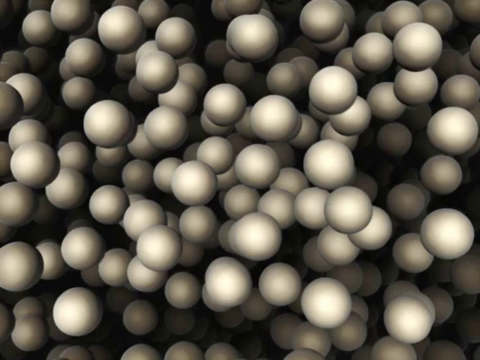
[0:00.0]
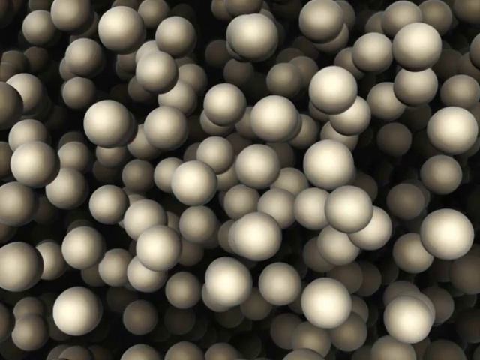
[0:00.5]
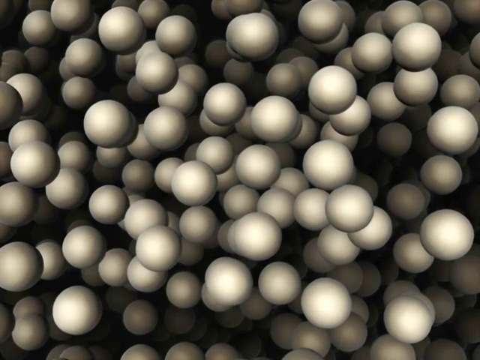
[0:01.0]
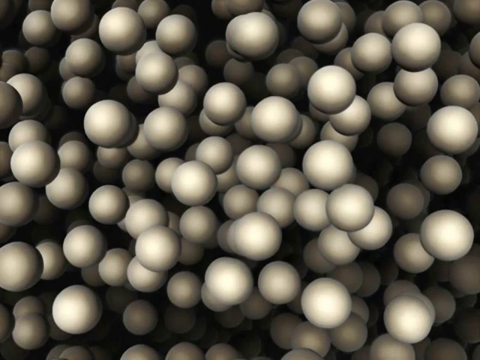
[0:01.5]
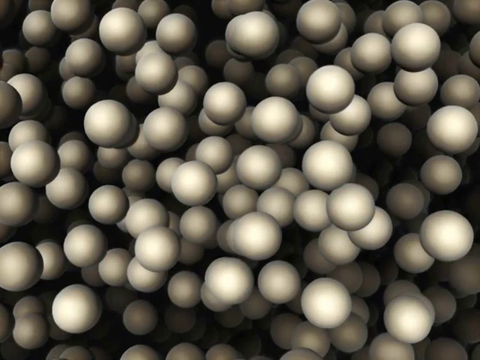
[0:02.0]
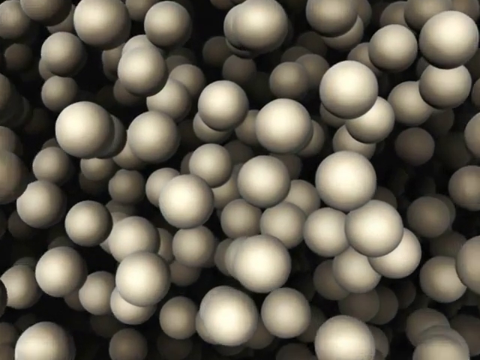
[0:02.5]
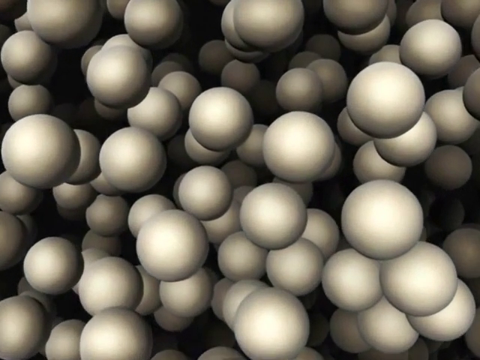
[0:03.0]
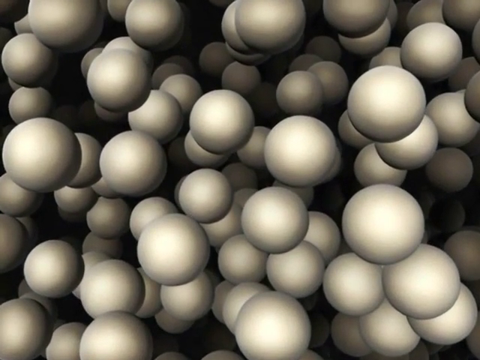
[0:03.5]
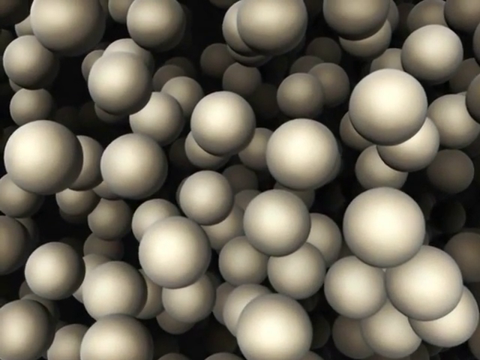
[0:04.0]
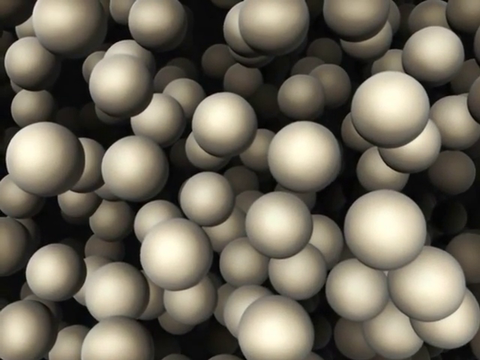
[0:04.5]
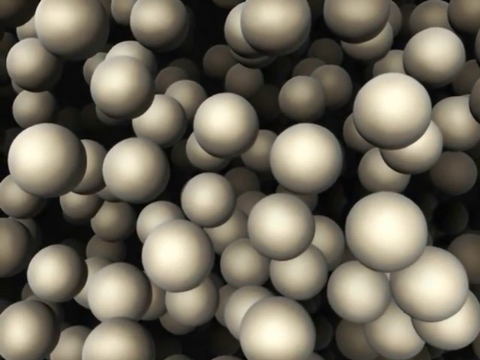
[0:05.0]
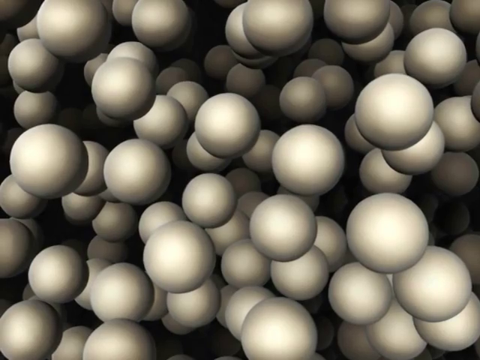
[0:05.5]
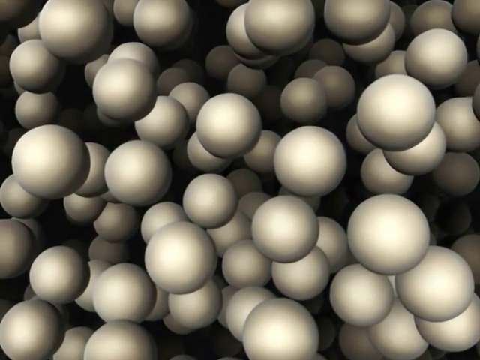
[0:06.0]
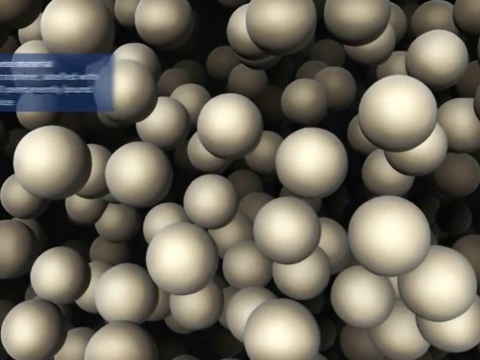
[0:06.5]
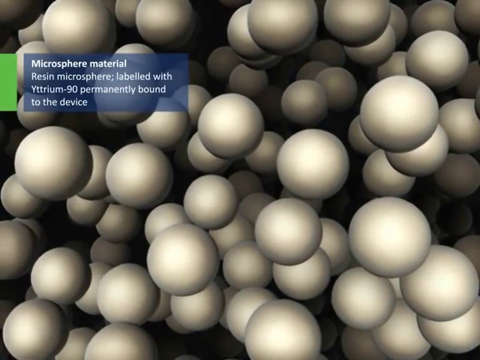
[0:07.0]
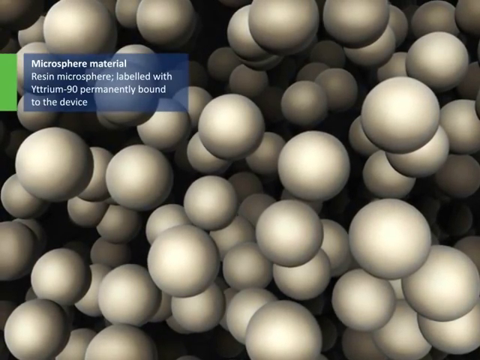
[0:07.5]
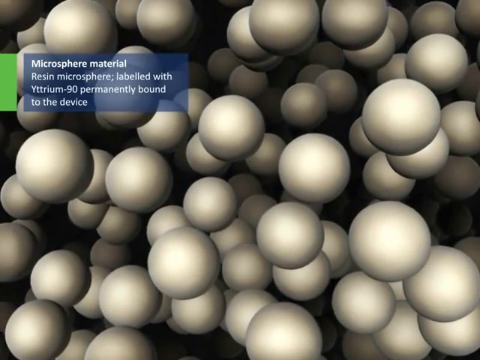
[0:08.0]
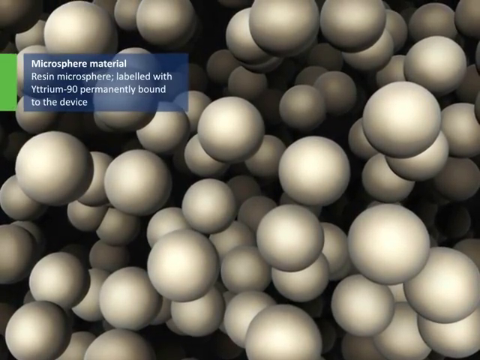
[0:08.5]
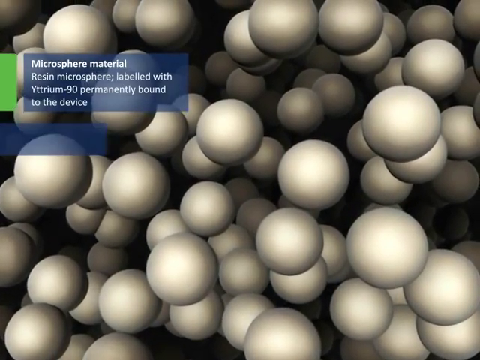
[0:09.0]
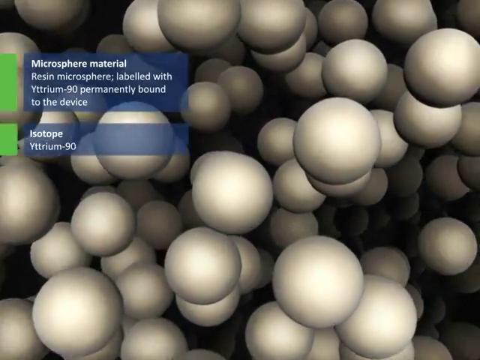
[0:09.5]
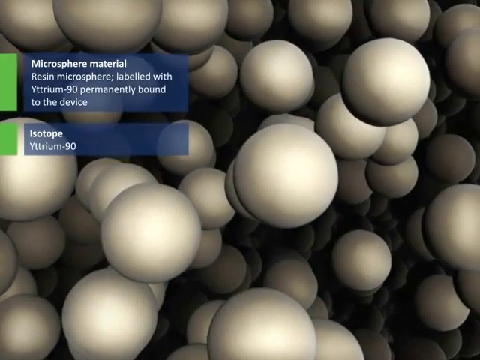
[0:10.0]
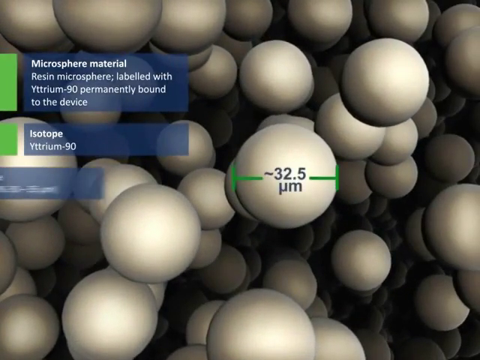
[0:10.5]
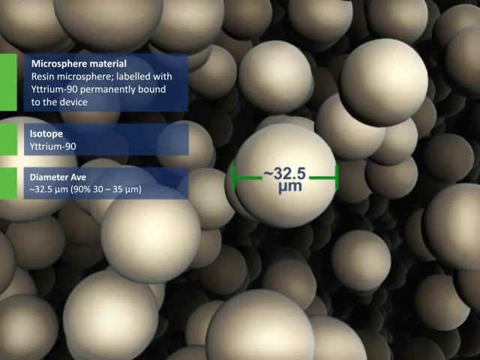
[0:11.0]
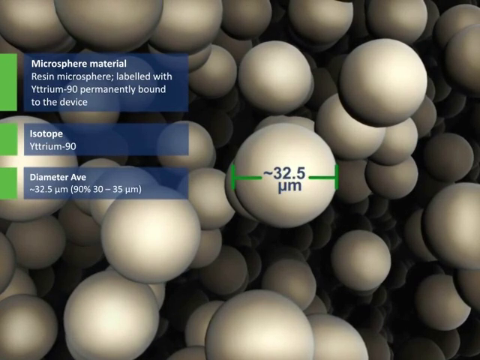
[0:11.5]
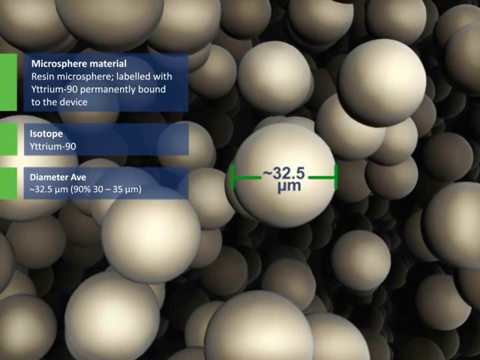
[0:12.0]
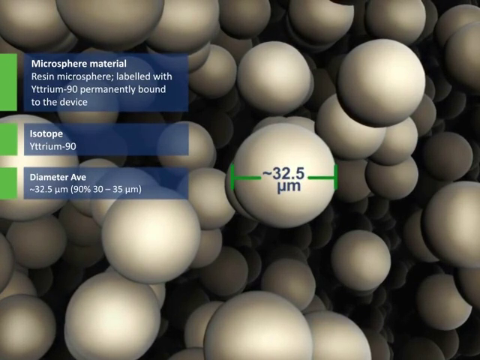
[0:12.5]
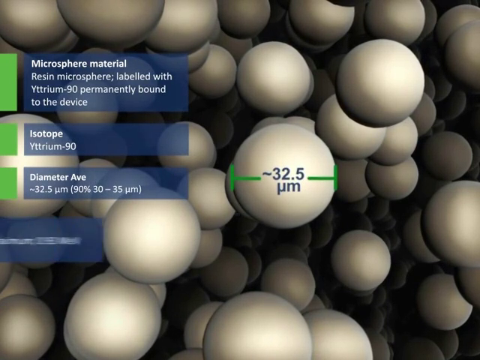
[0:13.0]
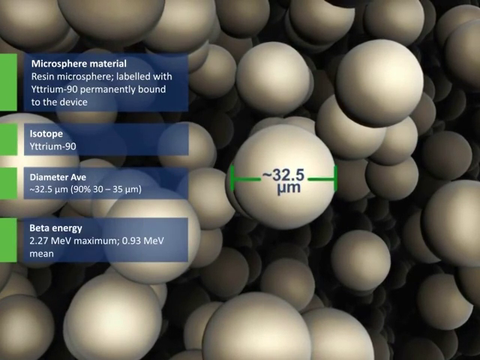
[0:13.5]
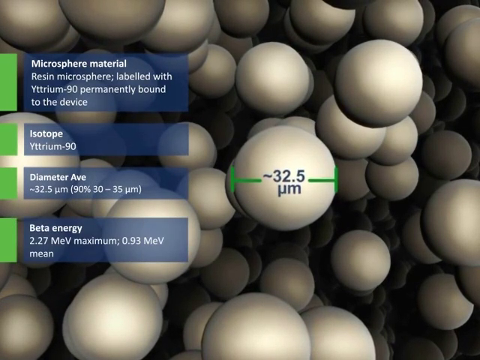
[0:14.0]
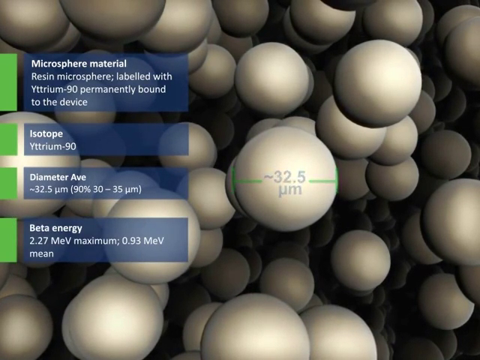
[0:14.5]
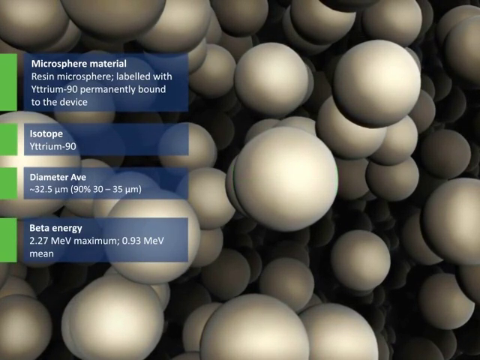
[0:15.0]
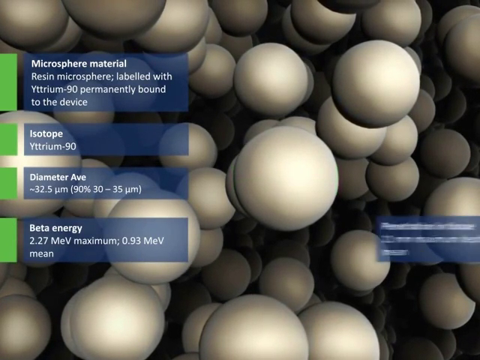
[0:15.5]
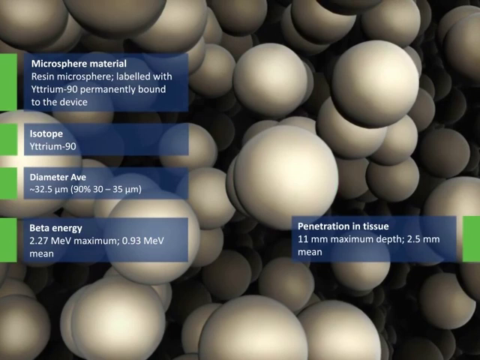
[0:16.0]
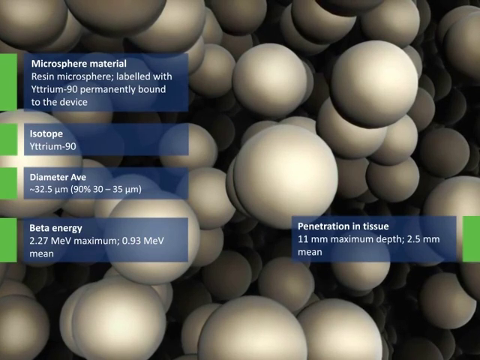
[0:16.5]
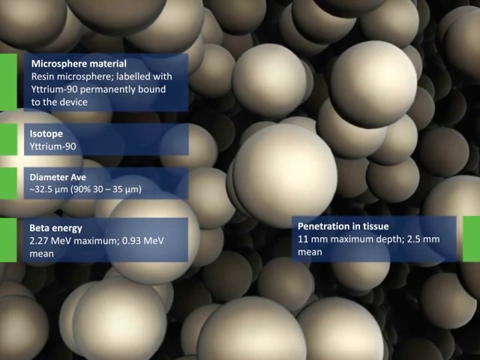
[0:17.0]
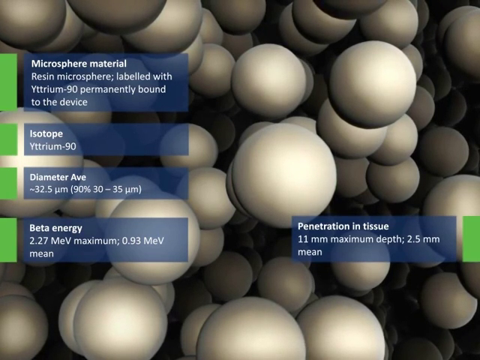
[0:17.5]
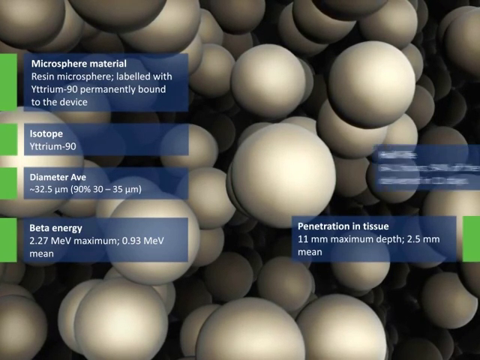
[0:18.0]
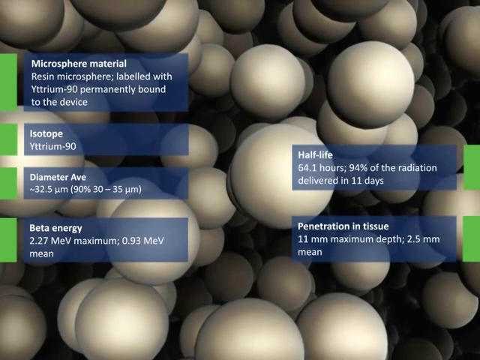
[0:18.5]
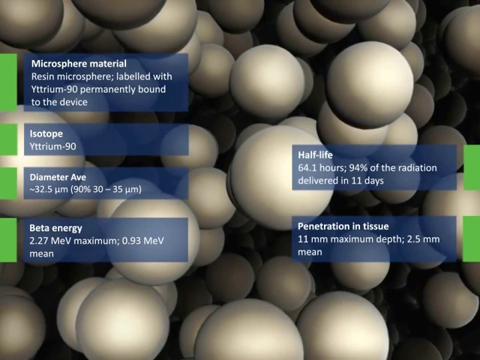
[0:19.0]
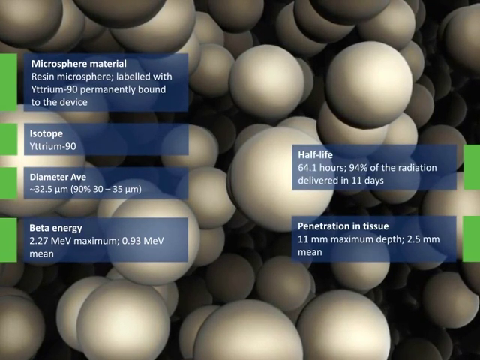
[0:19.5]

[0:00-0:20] The video opens on a still image of many circular, spherical objects filling the screen. They are a grey cream colour, with the ones in the background darker because they are in shadow. The view zooms in slightly and the spheres begin to move very gently and slowly, some of them touching each other. A blue text box with white text appears, reading "Microsphere material, resin microsphere labelled with Yttrium-90 permanently bound to the device", with a green logo to its left. Two more text boxes appear, giving isotope information and the diameter. The diameter is demonstrated on one of the spheres to the right, with a green arrow going across it and the size given as 32.5. A new text box then appears at the bottom with beta energy information, followed by a text box on the right-hand side covering penetration in tissue and half-life.